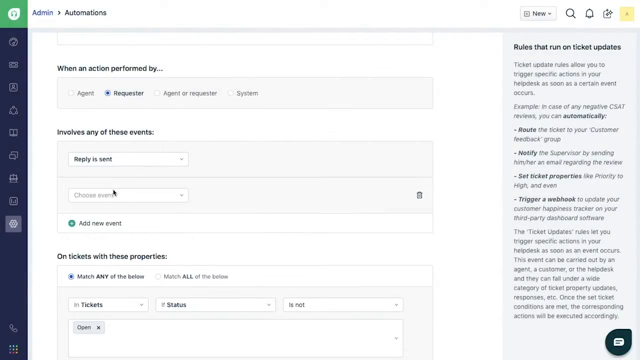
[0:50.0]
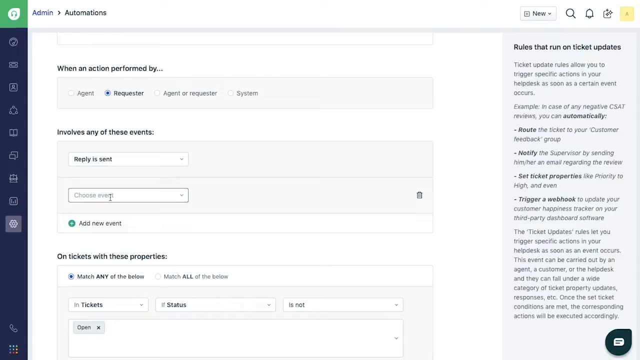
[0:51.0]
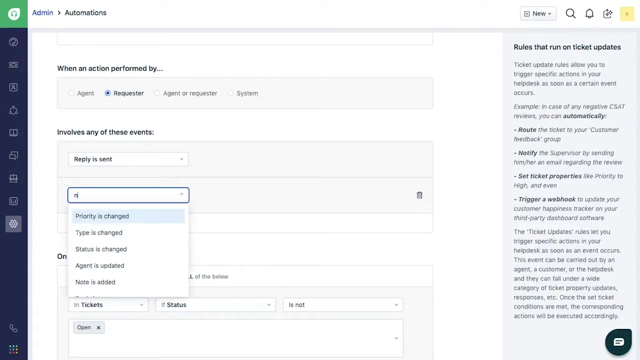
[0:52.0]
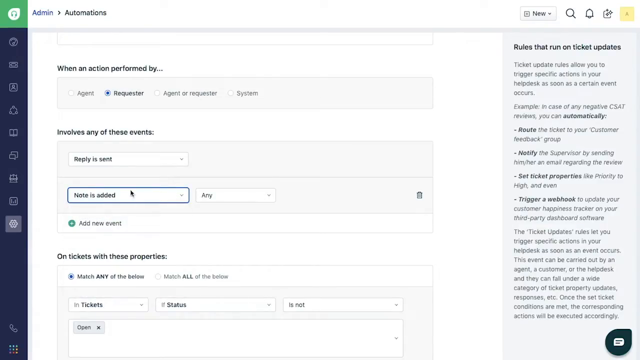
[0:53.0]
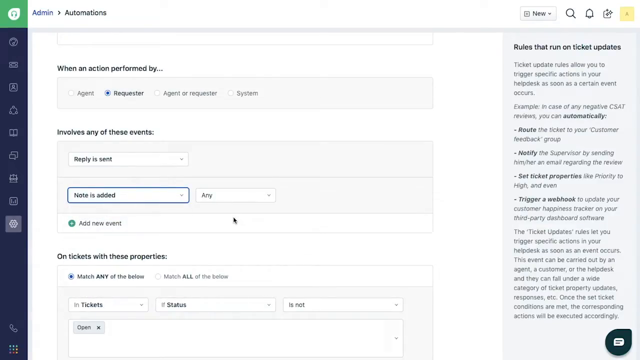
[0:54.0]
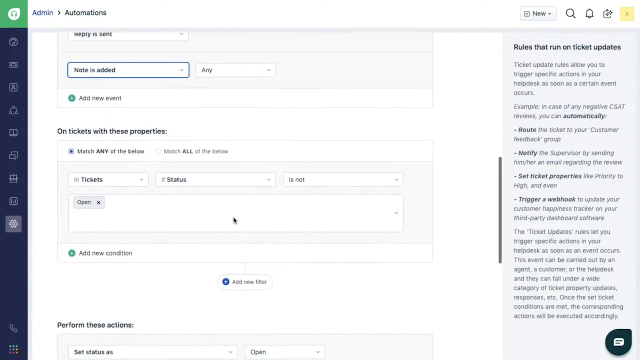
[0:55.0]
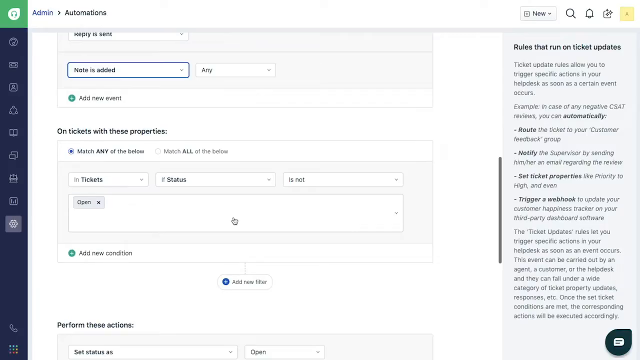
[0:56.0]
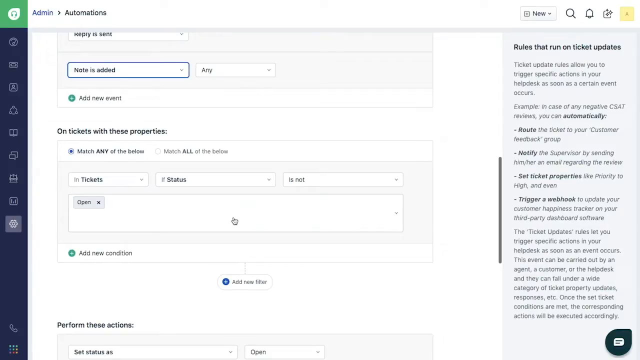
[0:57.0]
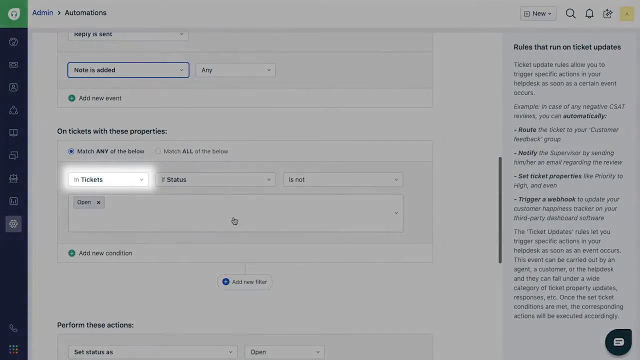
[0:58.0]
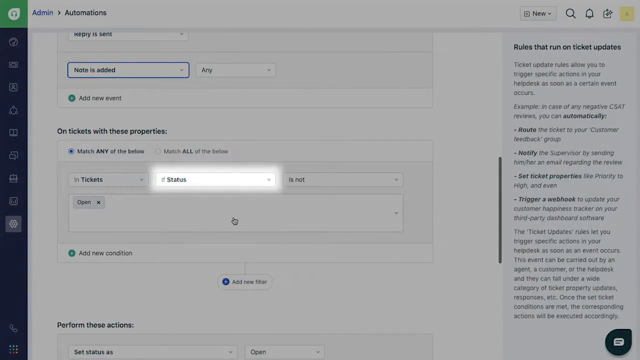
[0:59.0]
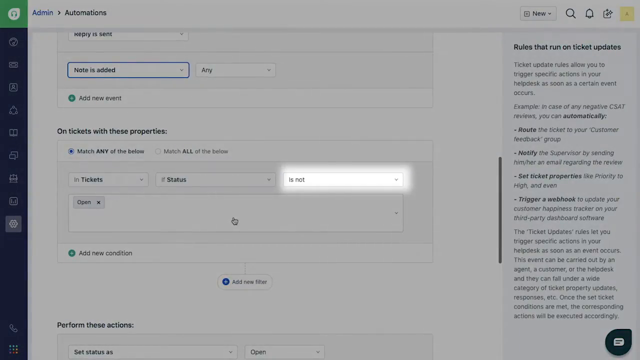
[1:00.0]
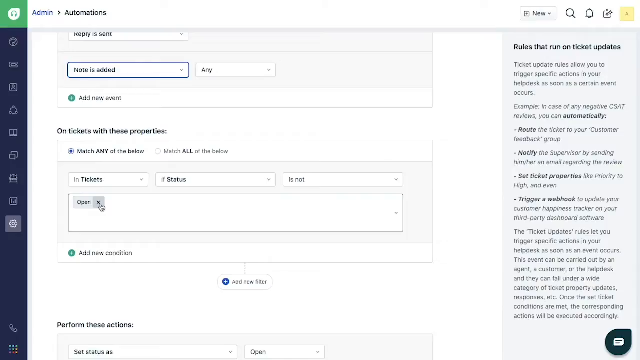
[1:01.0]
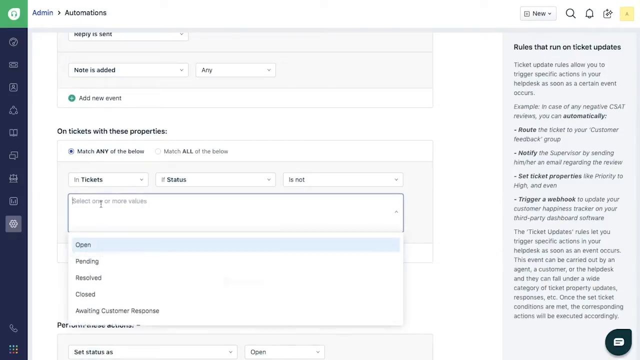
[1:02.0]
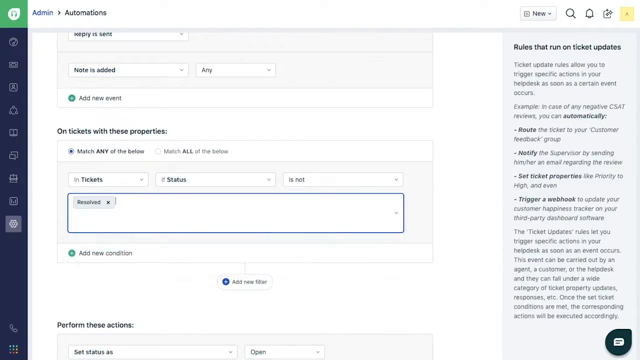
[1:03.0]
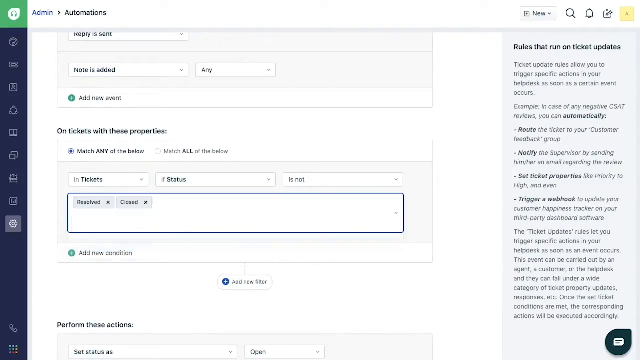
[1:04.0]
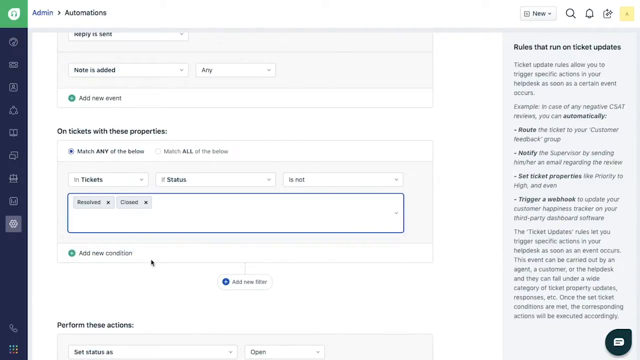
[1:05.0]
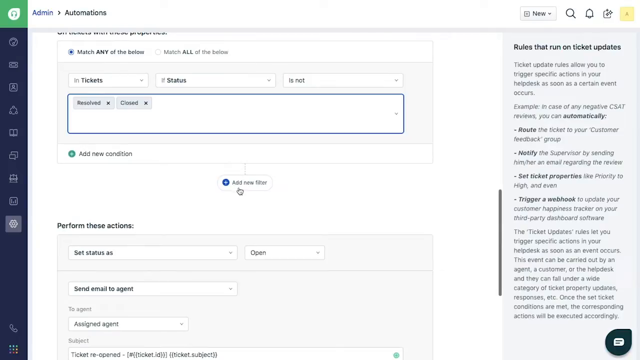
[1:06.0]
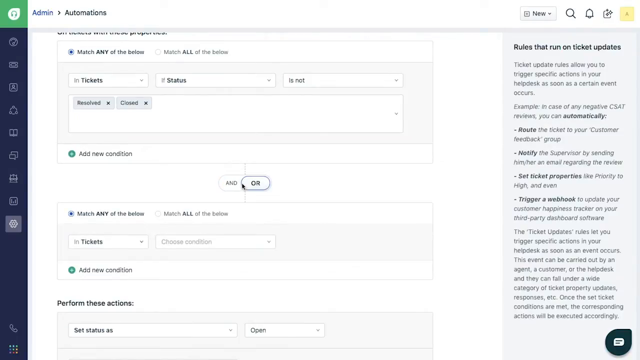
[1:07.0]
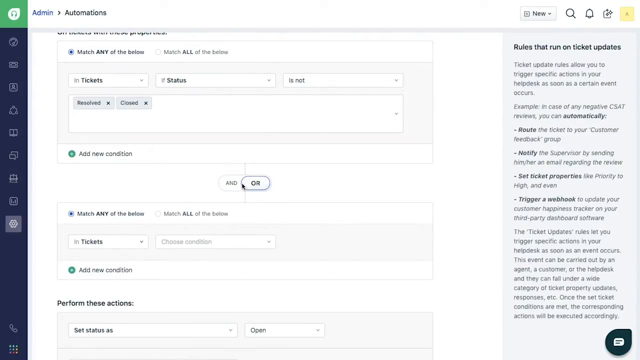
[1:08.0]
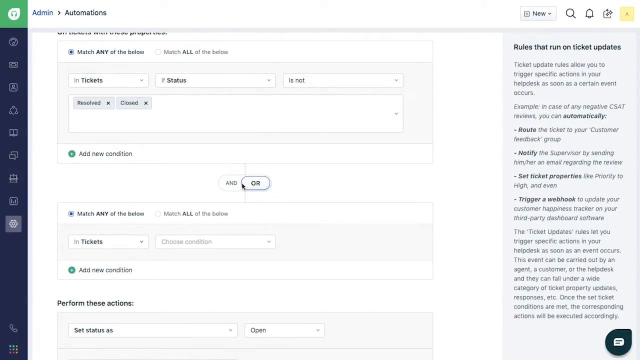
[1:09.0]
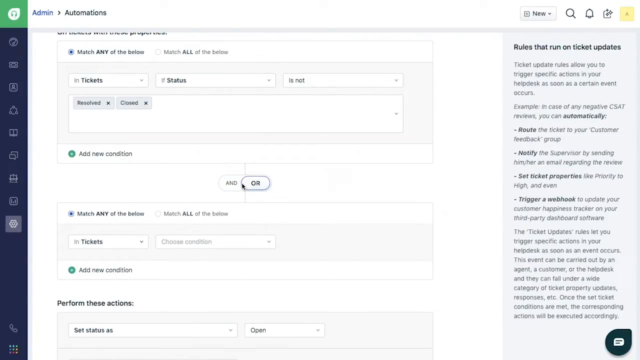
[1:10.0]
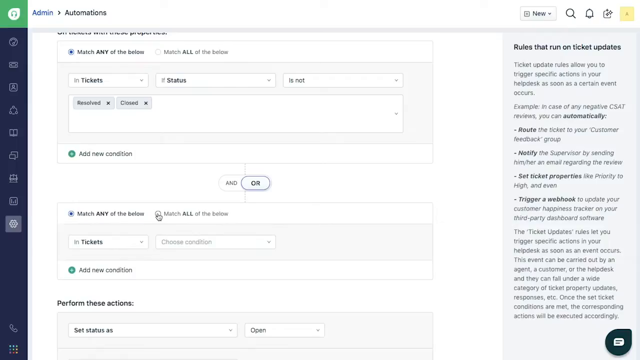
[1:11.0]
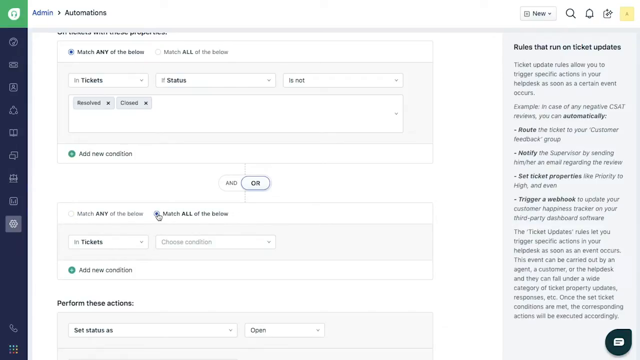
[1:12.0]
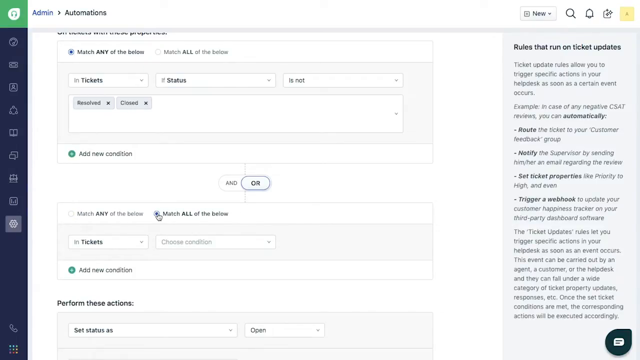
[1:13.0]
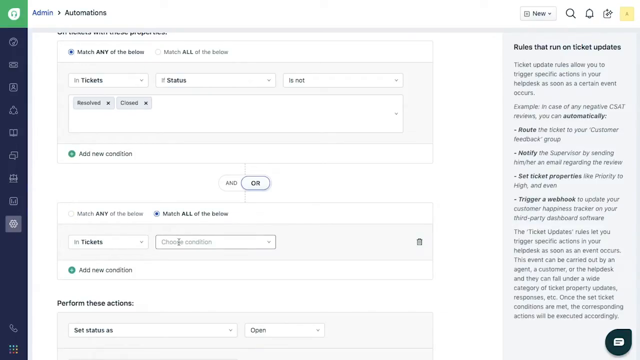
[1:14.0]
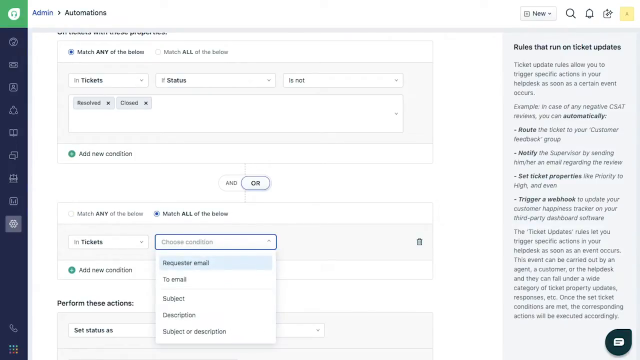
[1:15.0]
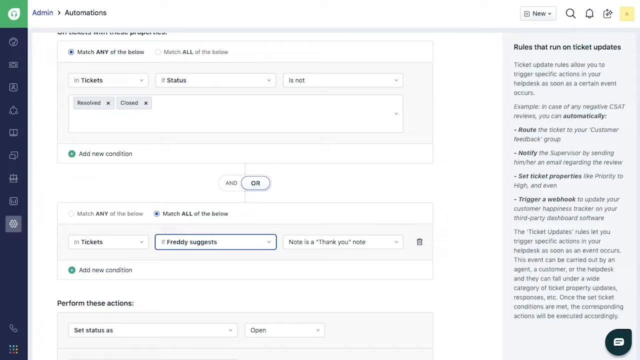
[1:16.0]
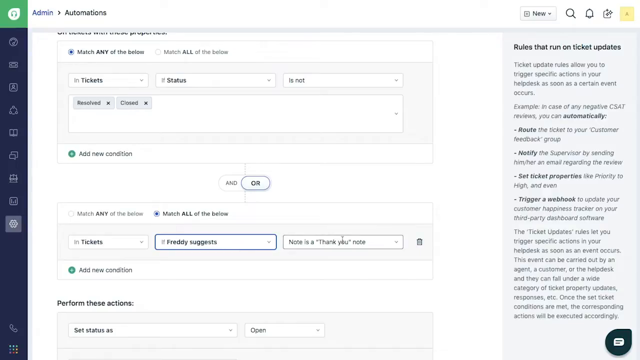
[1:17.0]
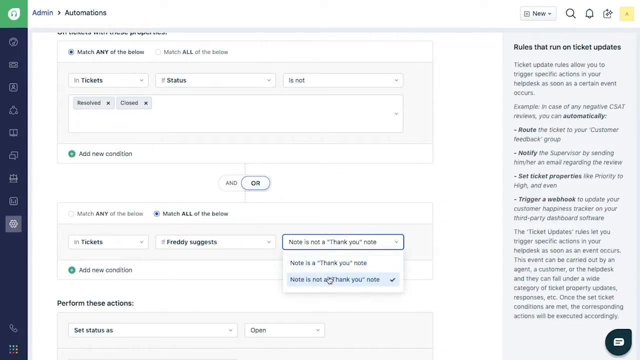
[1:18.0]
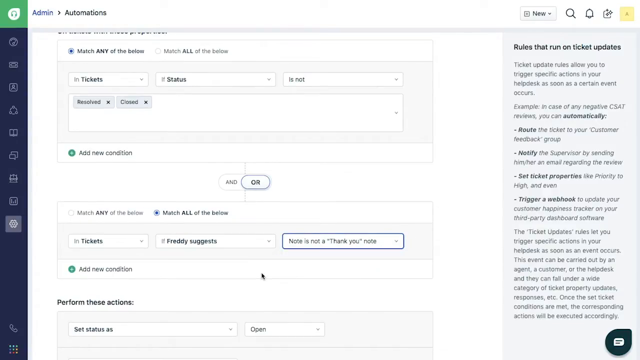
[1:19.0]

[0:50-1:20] A screen recording shows the settings of a ticket program, most likely a client or help desk ticketing system. At the top, a section reads "when an action is performed by" with four options: agent, requester, agent or requester, and system, with requester selected. The next section reads "involves any of these events" and has two drop-down menus. The top one is set to reply is sent, and the bottom one says "choose event"; the user clicks on it and types "note is added," which opens a new drop-down menu to its right, essentially a sub-menu. The user leaves it at the default, any, and continues scrolling down to the next section, which reads "on tickets with these properties."